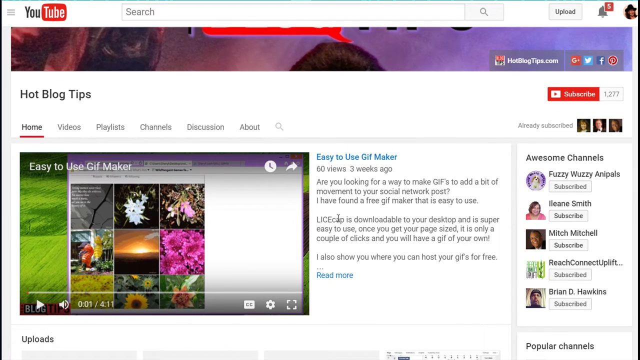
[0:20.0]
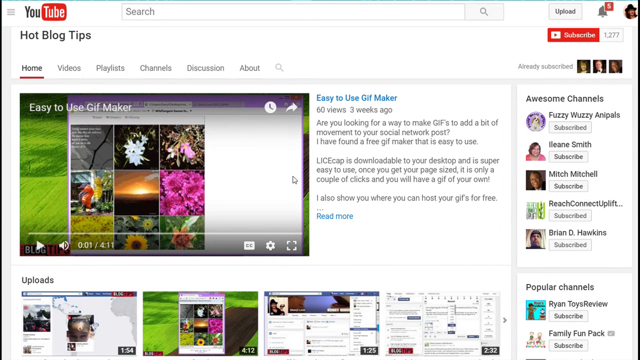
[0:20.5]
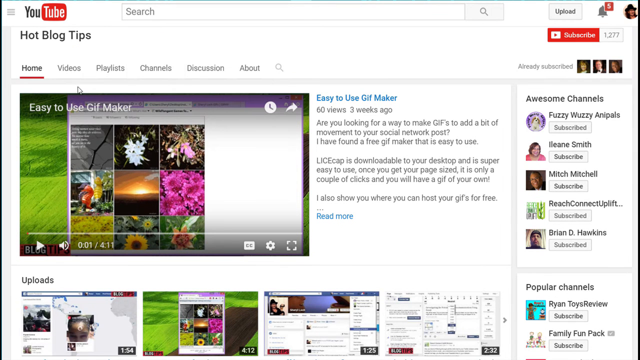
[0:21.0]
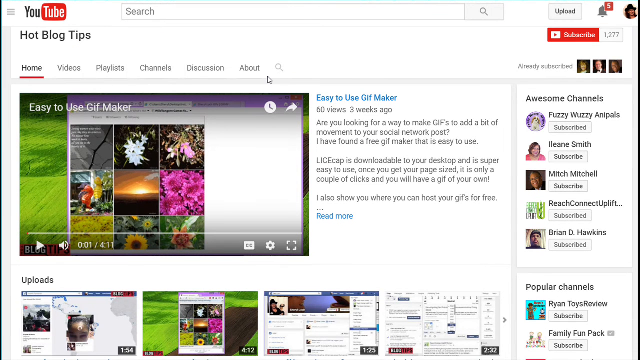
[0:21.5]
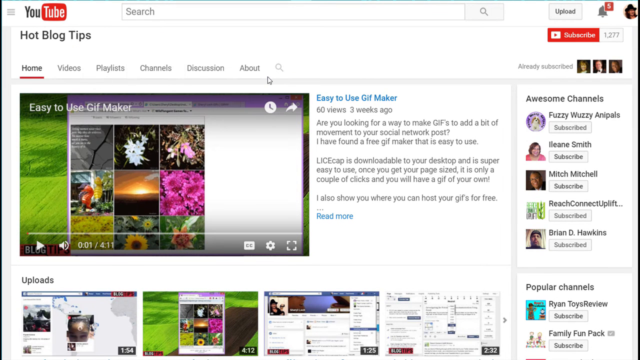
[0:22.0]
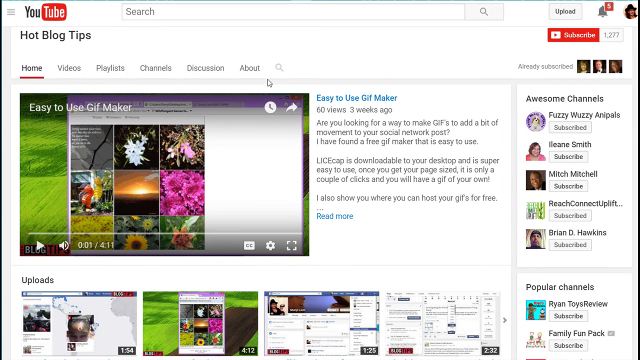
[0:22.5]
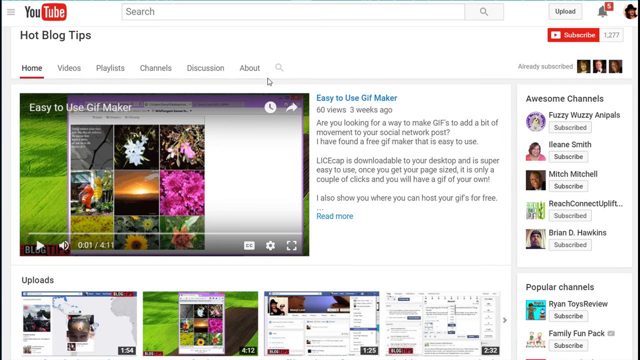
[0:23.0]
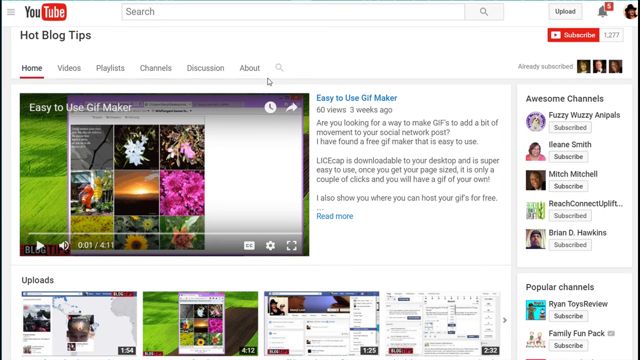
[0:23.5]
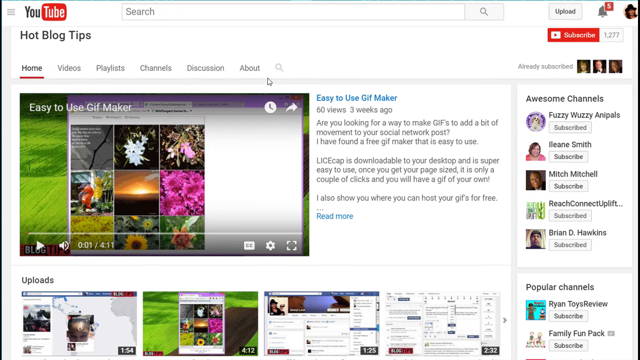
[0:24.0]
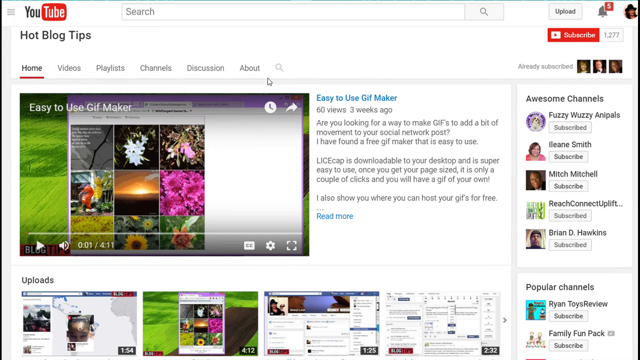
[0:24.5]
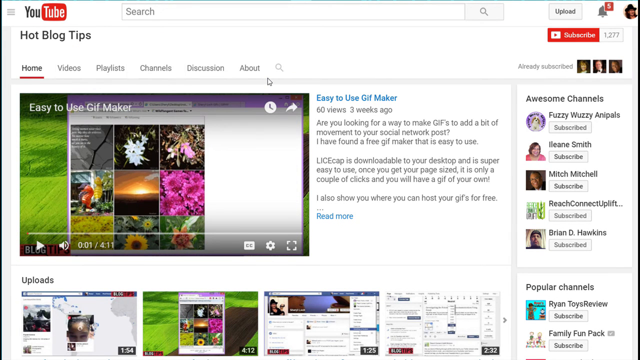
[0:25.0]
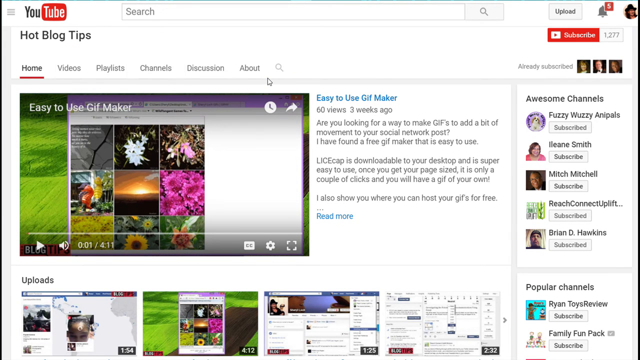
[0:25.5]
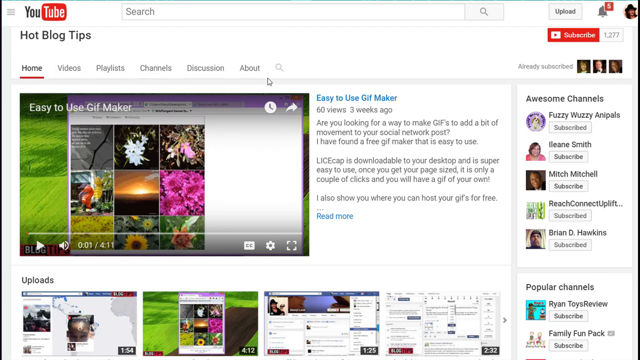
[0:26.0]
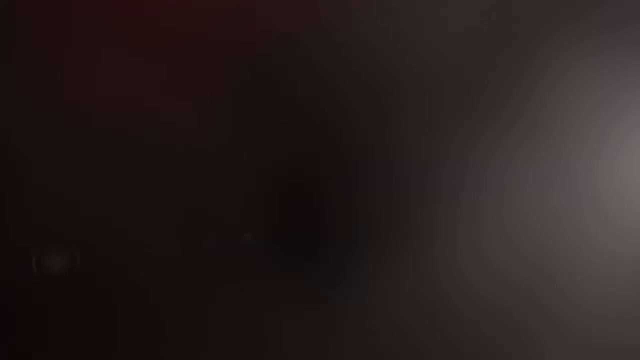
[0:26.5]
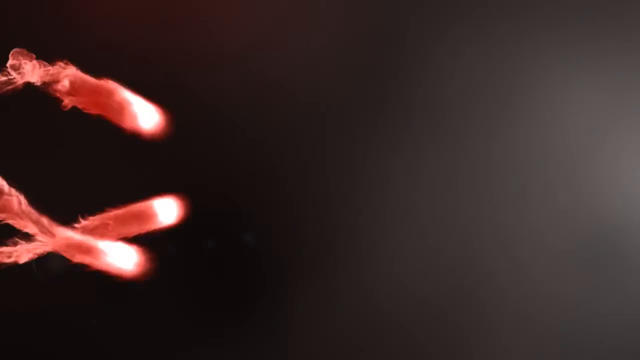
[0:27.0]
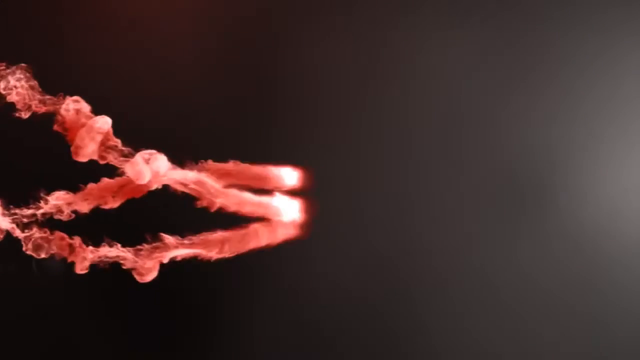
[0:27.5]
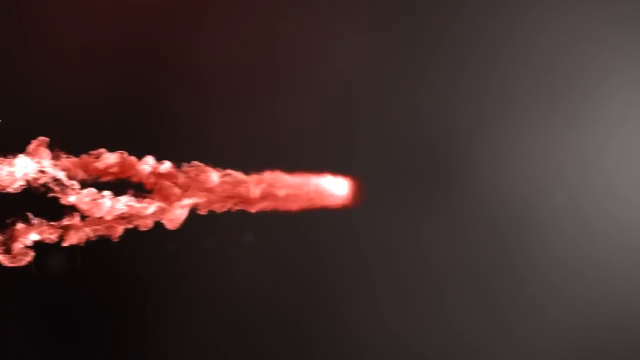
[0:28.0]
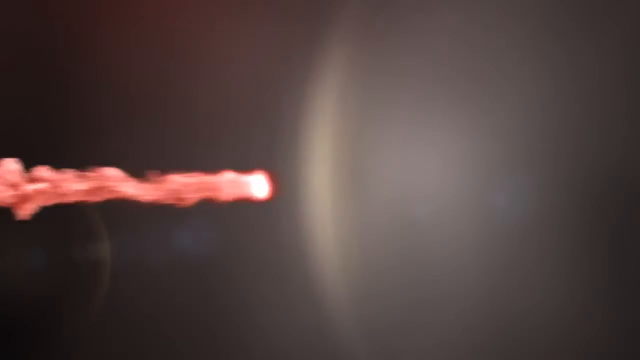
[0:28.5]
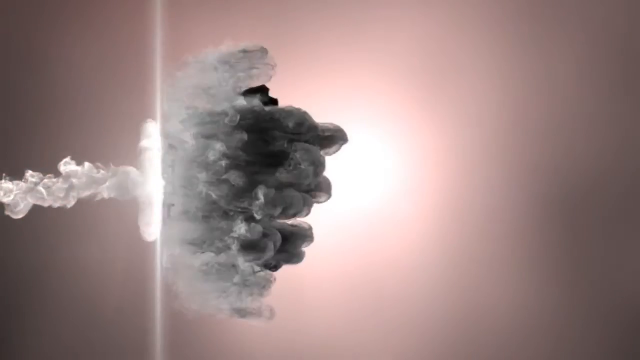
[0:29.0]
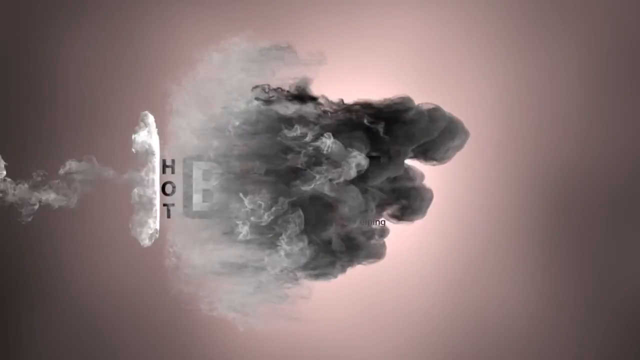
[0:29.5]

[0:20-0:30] The page shows "hot blog tips" and suggestions, such as an easy-to-use GIF maker, how to use downloads for the desktop, and other technical tips for starting a channel or composing a social network post. A picture accompanies the easy-to-use GIF maker: many small pictures in a grid format with flowers, including sunflowers, and some green grass to the left of the picture. Down the right-hand side is a list of other channels titled "awesome channels"; the top one is "fuzzy wuzzy aniples", with "subscribed" underneath it. Underneath the easy-to-use GIF maker video it shows 60 views and three weeks ago. Another selection of video clips is below. The view then turns into another page with a picture of smoke, and it says hot blog. Above the "home", "videos", "playlist", "channels", "discussion" and "about" section of the home page are the words "hot blog tips".